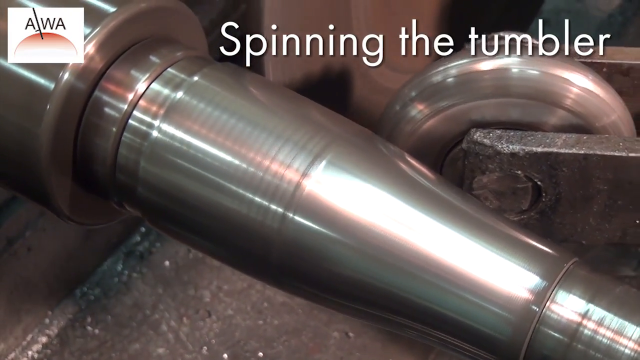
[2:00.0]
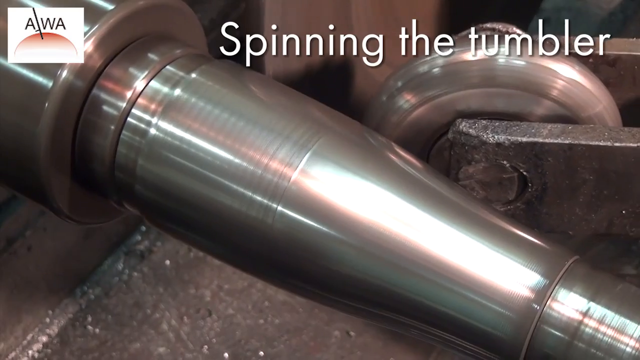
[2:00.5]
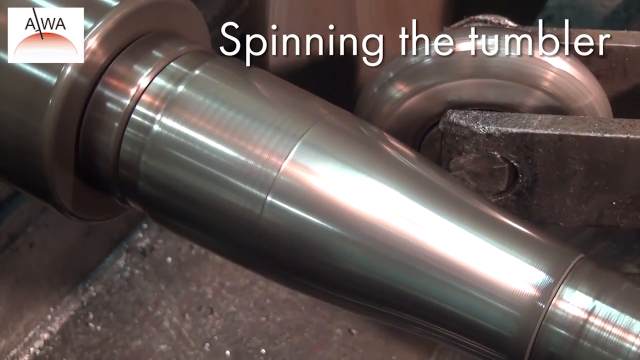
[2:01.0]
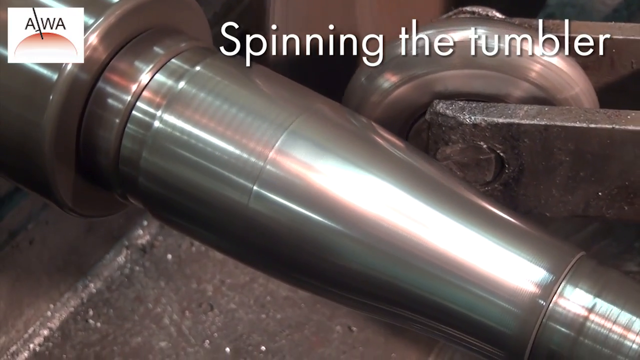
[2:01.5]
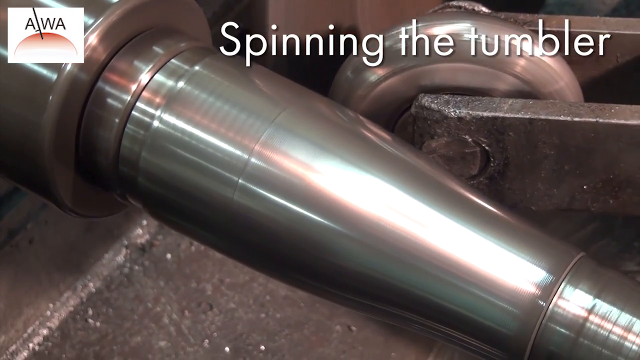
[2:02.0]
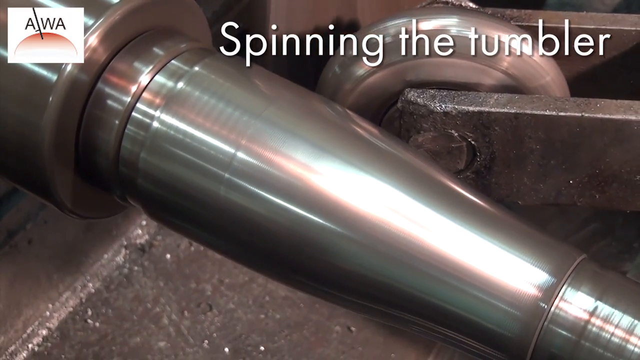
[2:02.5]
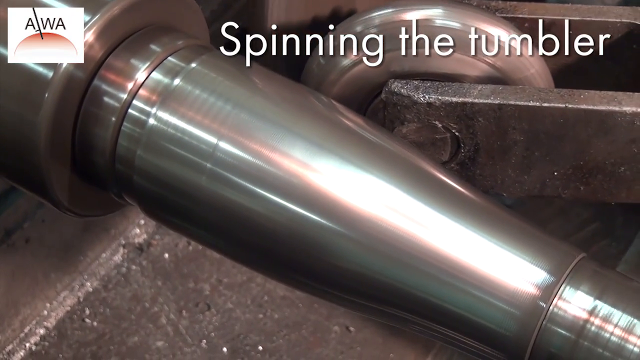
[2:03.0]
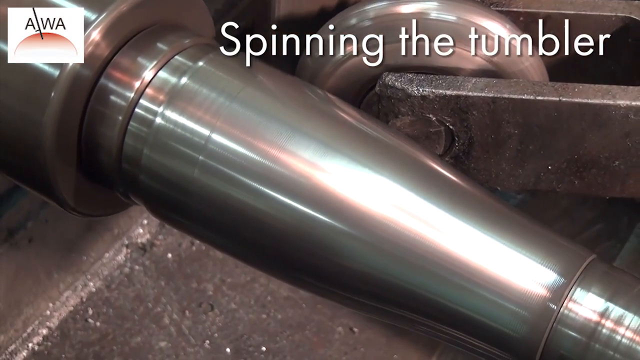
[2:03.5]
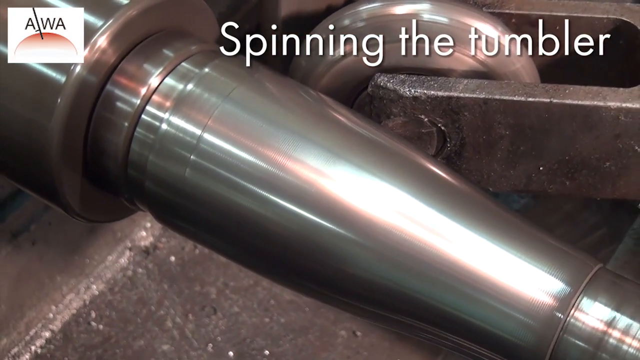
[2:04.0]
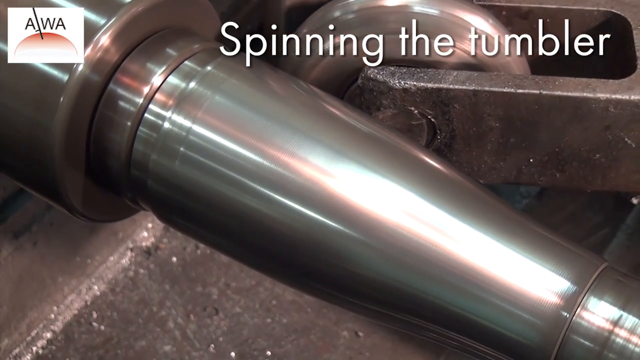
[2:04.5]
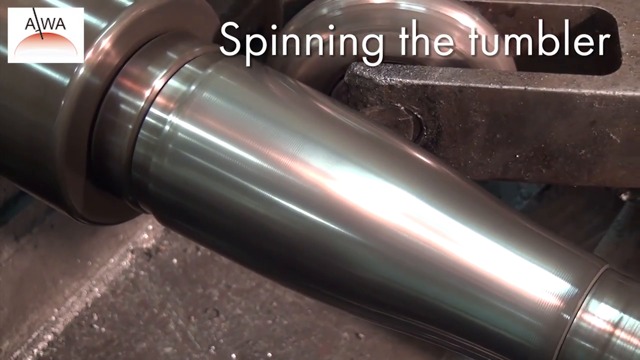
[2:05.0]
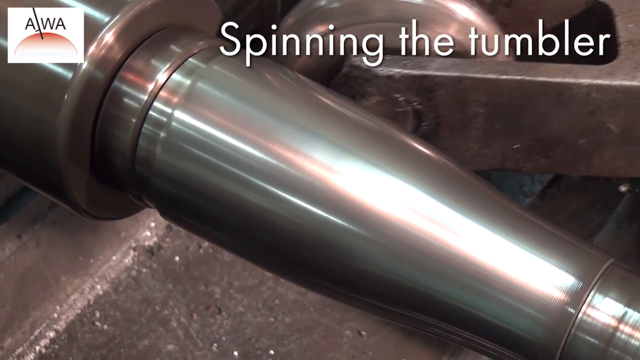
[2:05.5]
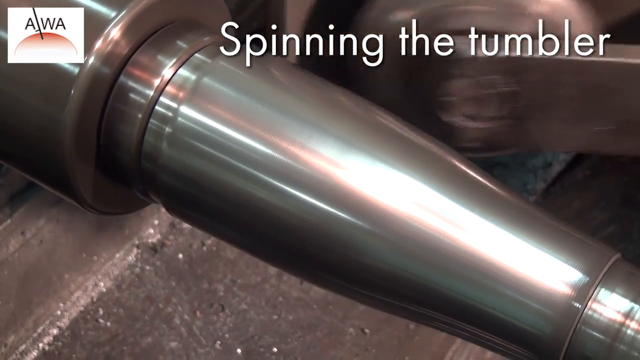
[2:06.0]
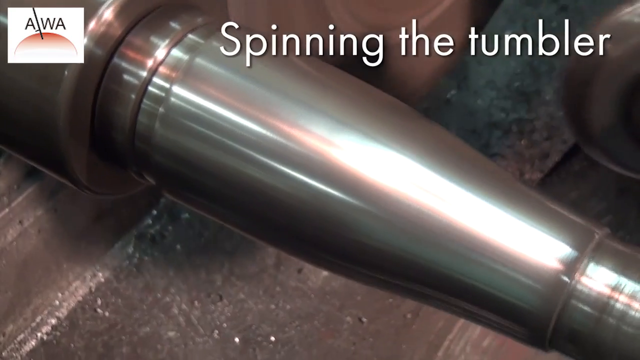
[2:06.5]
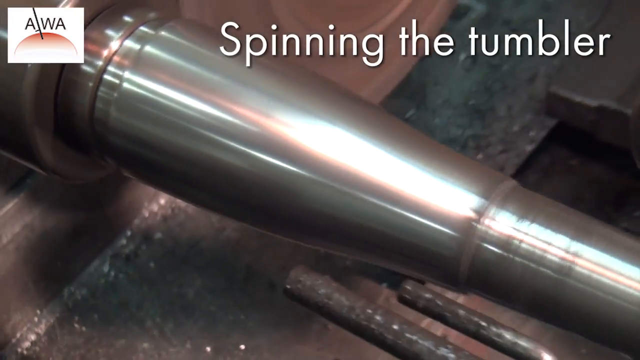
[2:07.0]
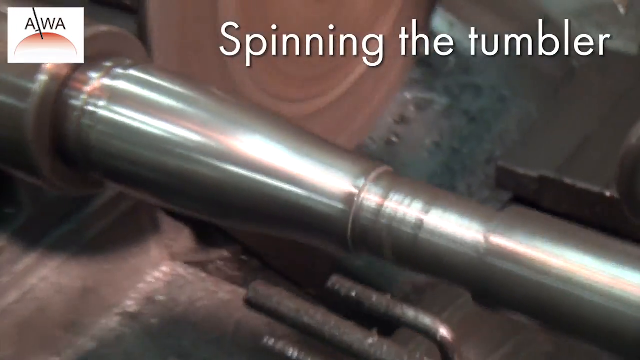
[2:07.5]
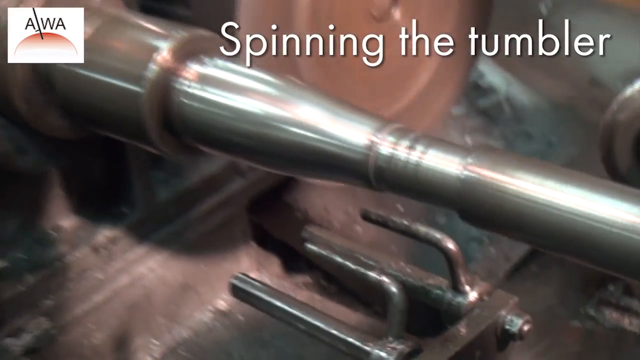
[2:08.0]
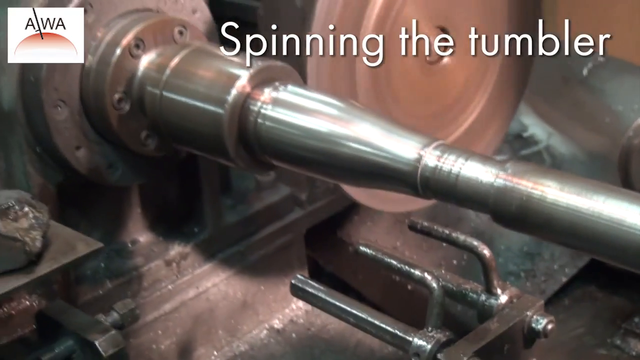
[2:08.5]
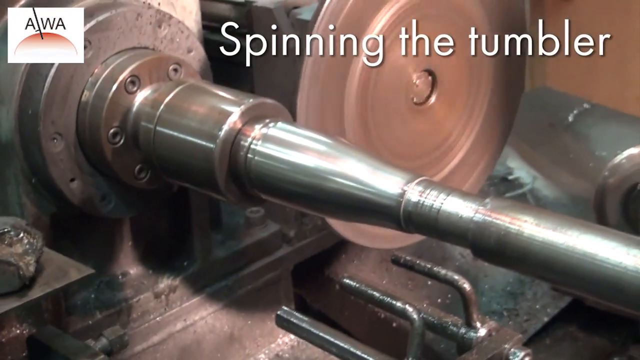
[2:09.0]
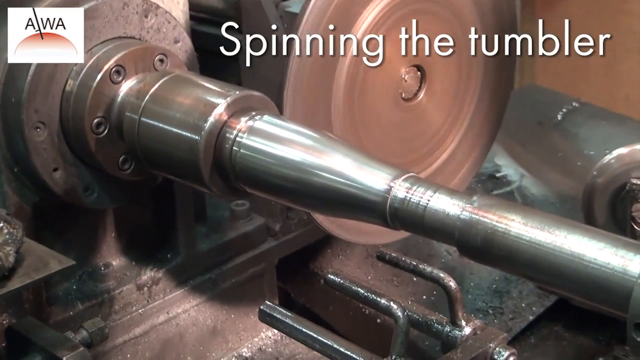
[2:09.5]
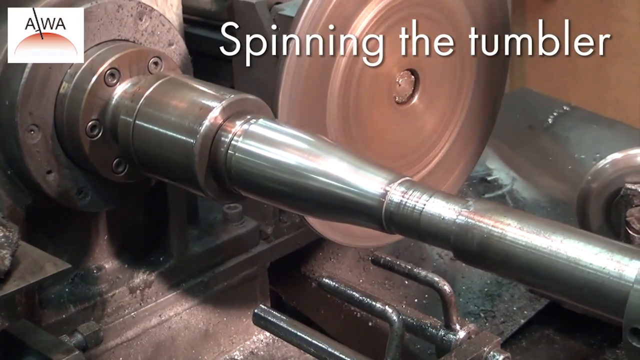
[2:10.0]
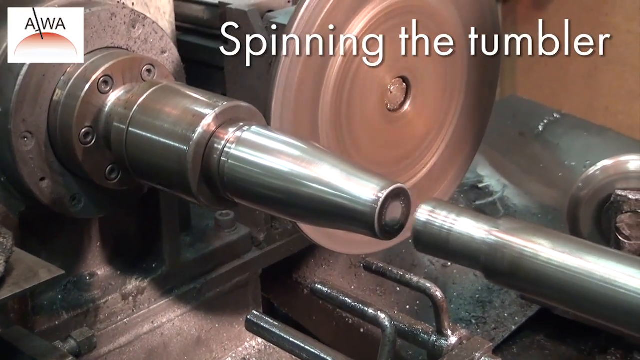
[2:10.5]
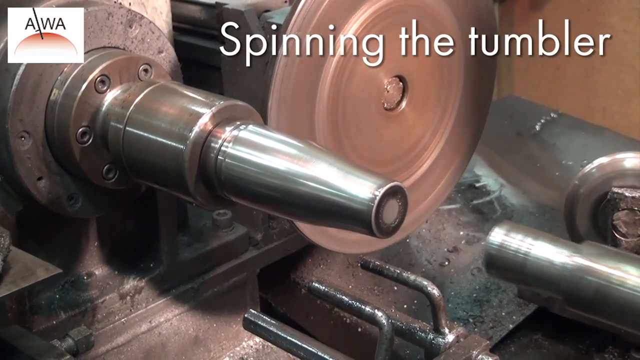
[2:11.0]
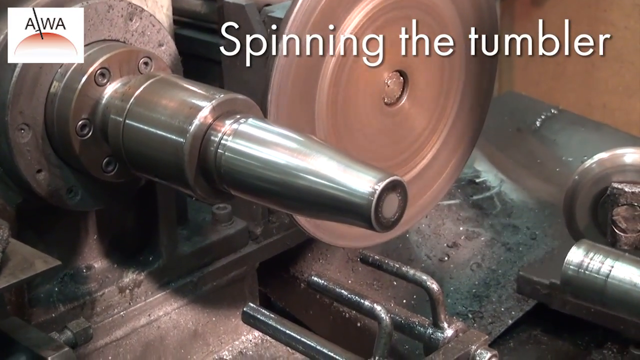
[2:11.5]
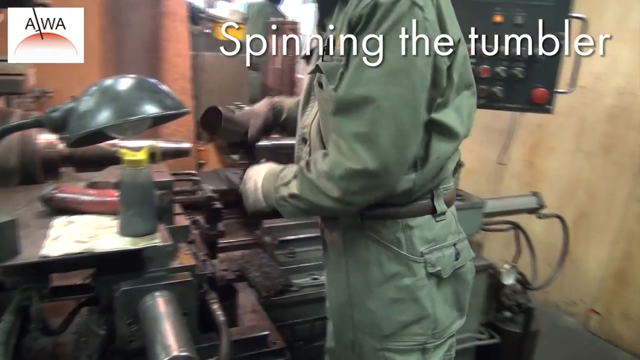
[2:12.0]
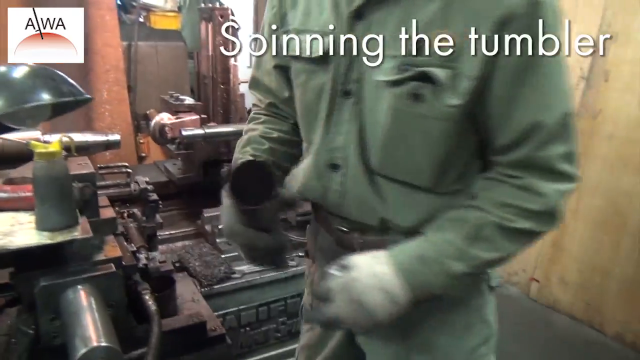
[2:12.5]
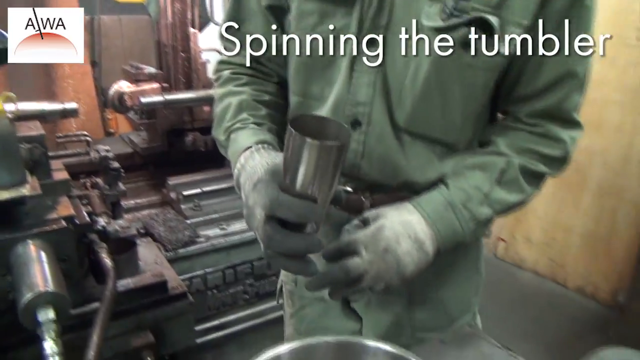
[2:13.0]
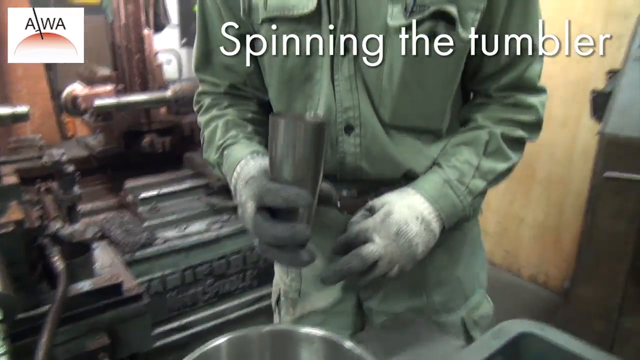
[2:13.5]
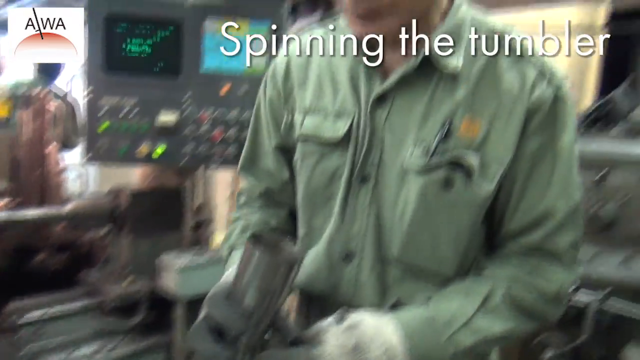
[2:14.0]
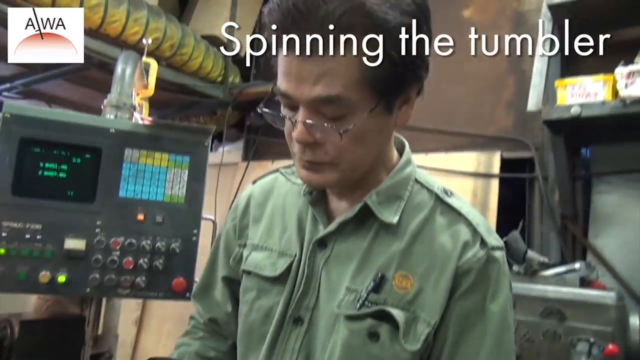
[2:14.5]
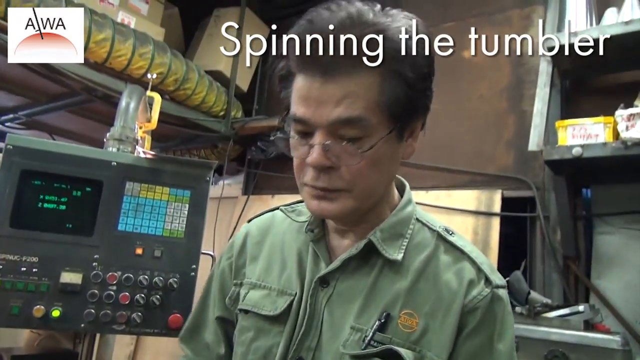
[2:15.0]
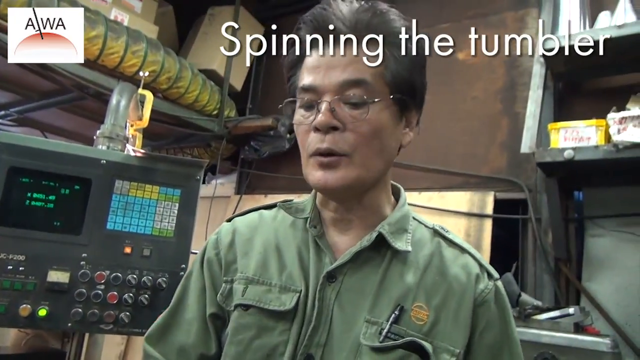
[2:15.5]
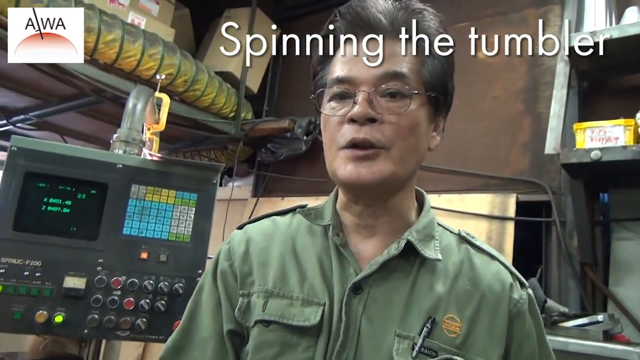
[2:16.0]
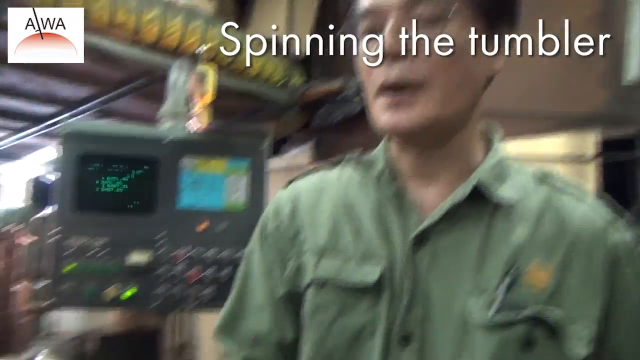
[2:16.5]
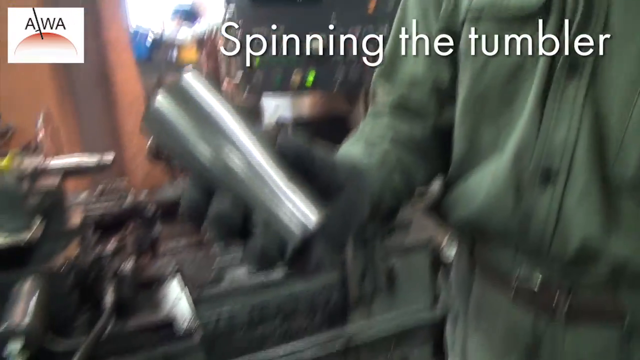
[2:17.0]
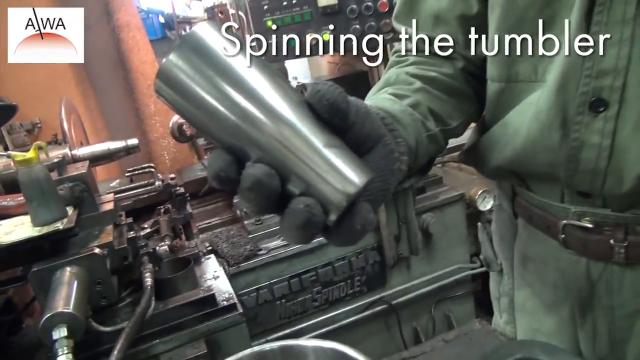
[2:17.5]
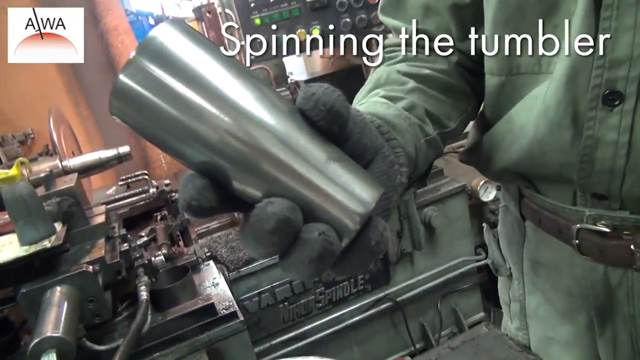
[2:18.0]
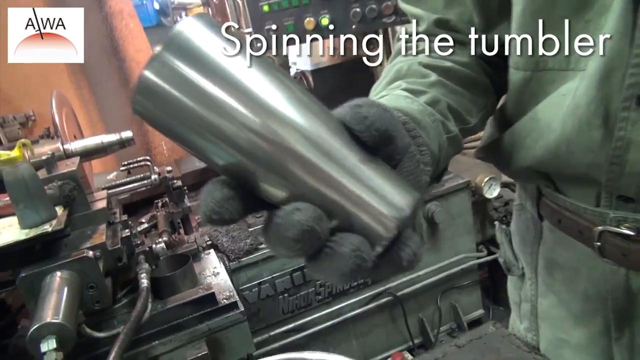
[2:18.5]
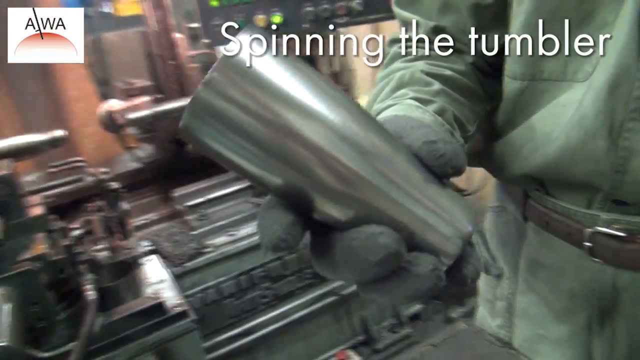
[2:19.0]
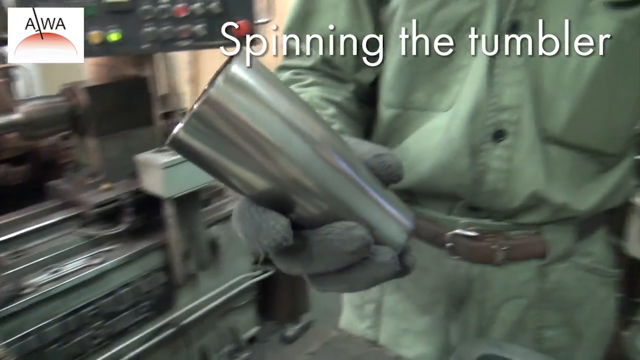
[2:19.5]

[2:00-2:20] A large metal disc adjusts a tumbler in a factory. The tumbler is attached to a metal pole, with a couple of metal rods underneath. The pole pulls away. An Asian man wearing glasses, green khakis and dark grey gloves holds the tumbler; he is apparently speaking, and he holds the tumbler up to the camera. The tumbler is silver, very long and shiny, with a flat bottom. Behind him are lots of complex machines, including a set of knobs and dials, mostly looking old, outdated, dull and rusty. A spinning wheel is next to the tumbler. He has a pin in his shirt pocket and a yellow logo sewn above the pocket, and he wears a brown belt, a shirt with buttons and long pants. The factory lighting is fairly bright, so everything is easy to see.